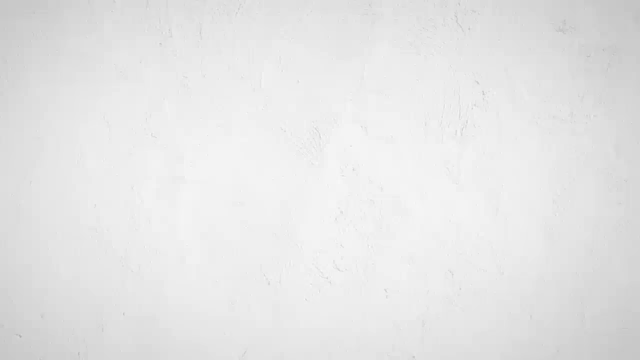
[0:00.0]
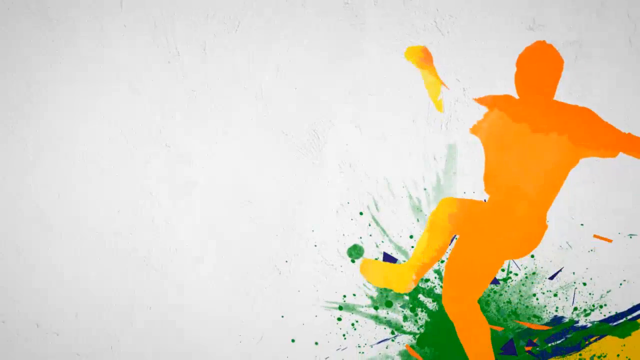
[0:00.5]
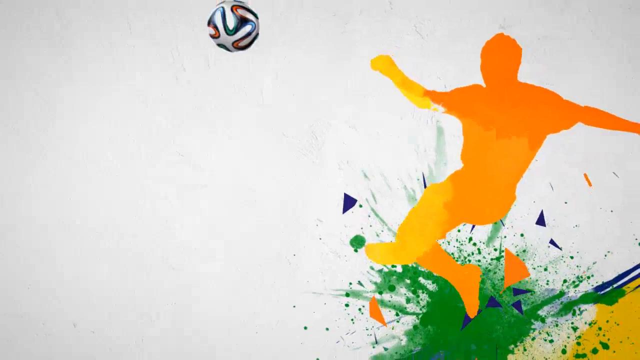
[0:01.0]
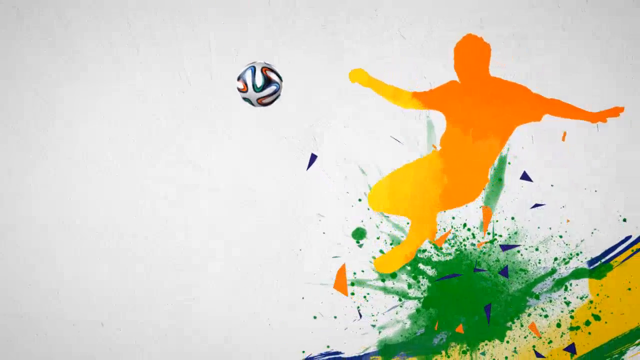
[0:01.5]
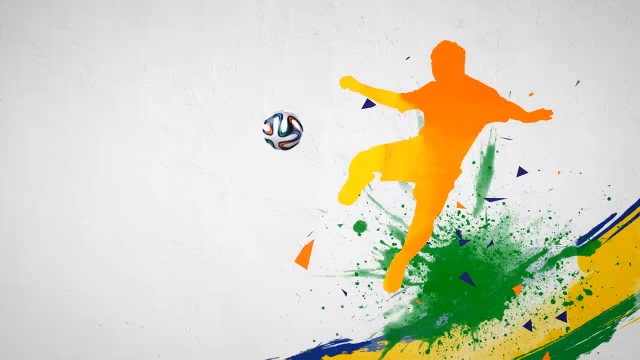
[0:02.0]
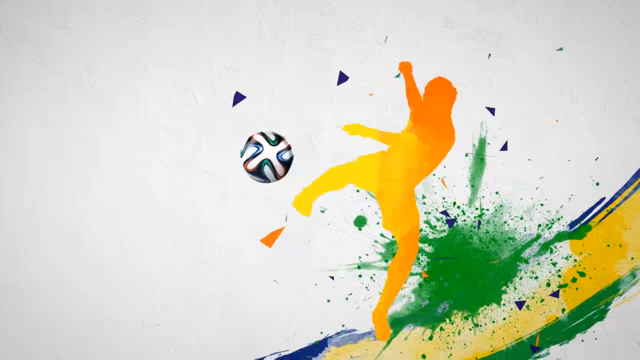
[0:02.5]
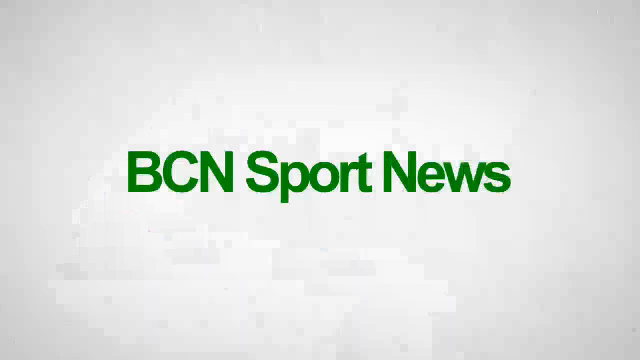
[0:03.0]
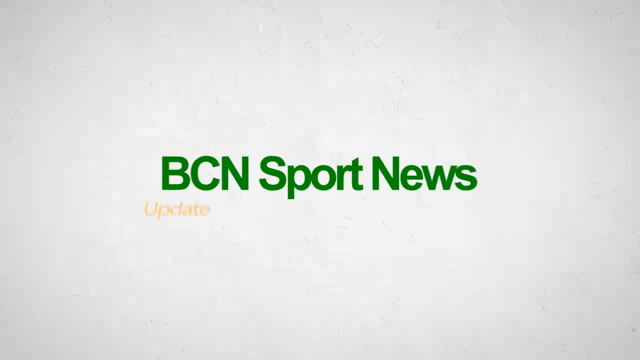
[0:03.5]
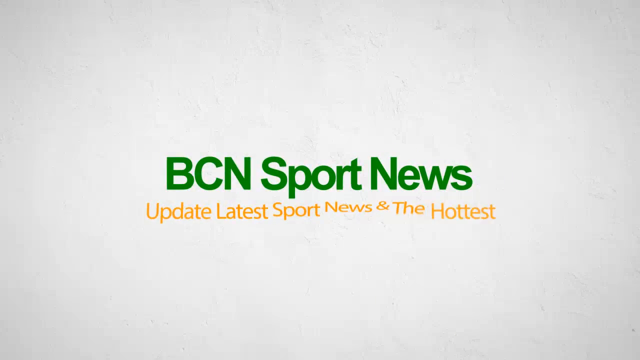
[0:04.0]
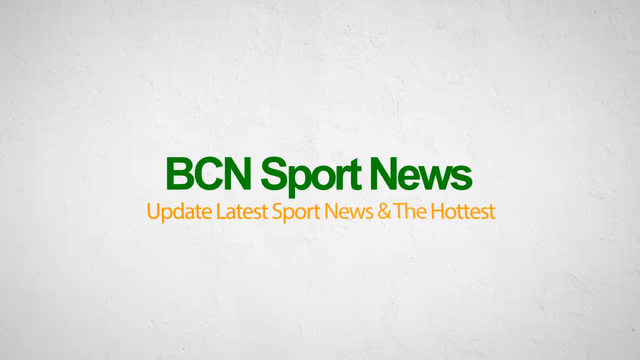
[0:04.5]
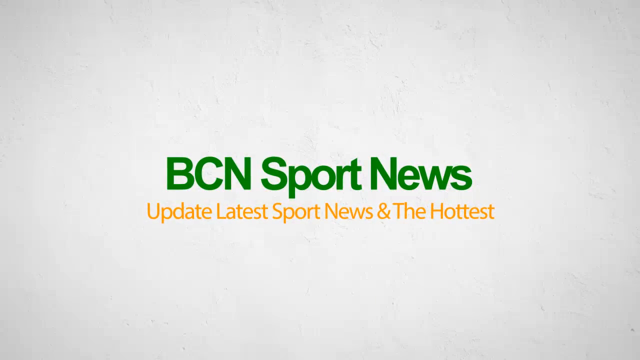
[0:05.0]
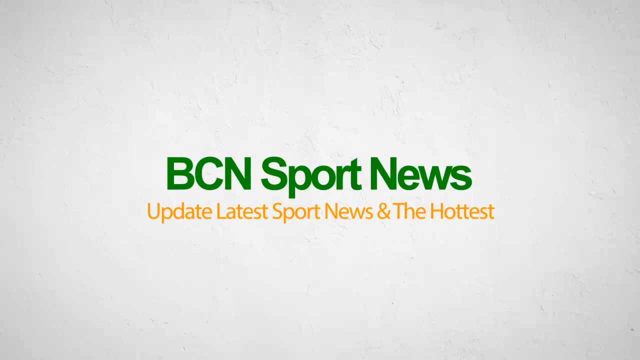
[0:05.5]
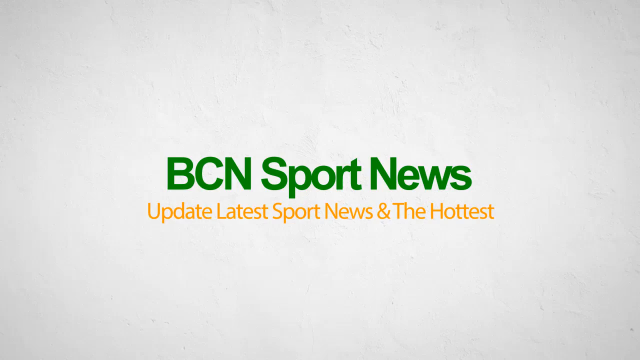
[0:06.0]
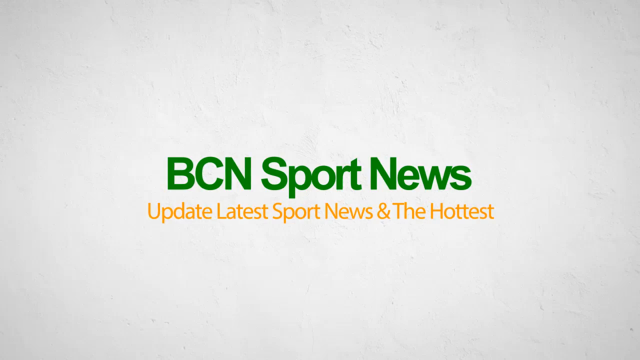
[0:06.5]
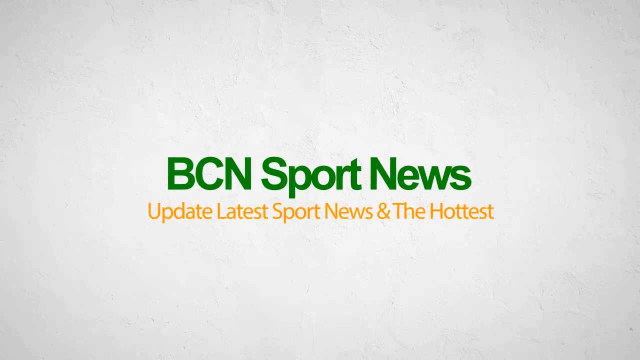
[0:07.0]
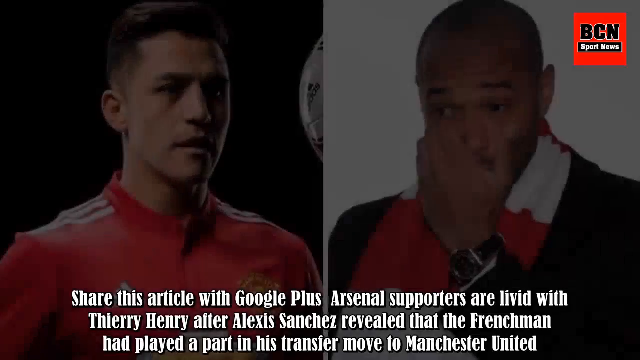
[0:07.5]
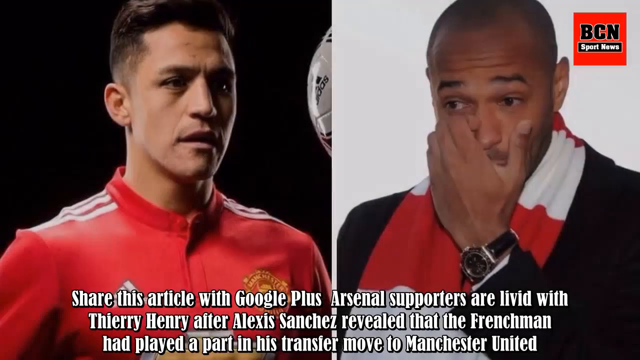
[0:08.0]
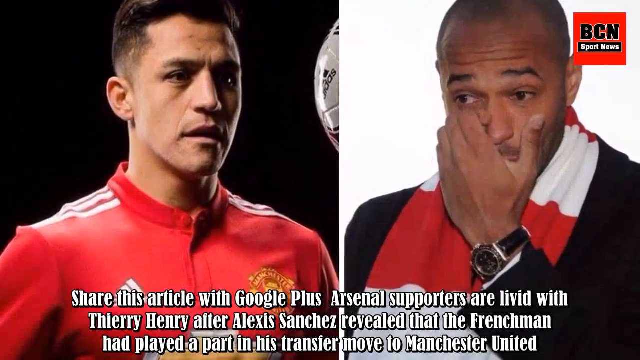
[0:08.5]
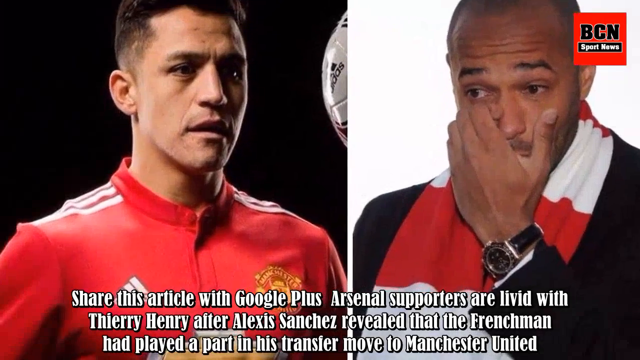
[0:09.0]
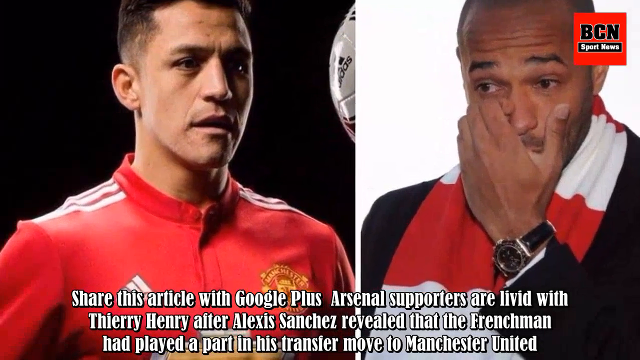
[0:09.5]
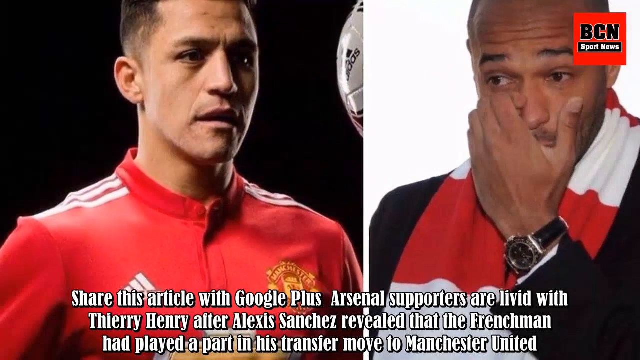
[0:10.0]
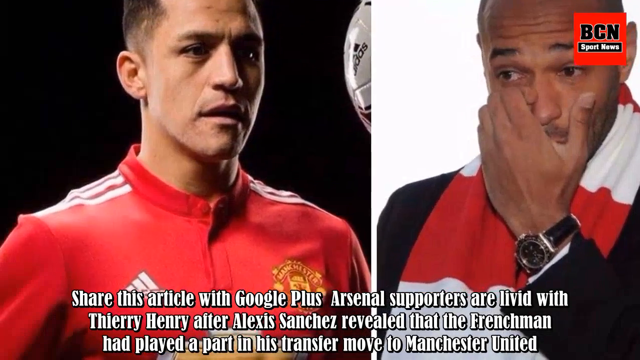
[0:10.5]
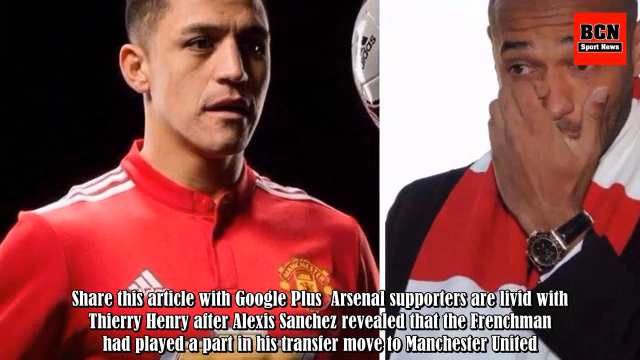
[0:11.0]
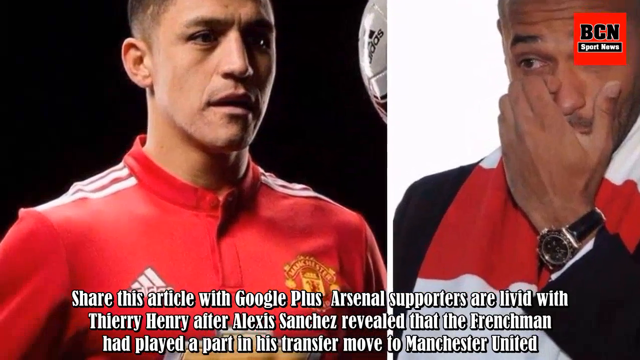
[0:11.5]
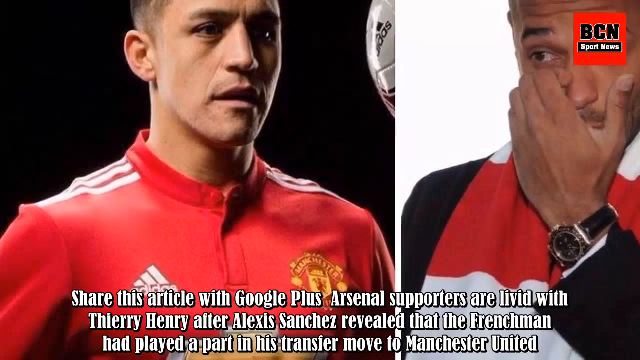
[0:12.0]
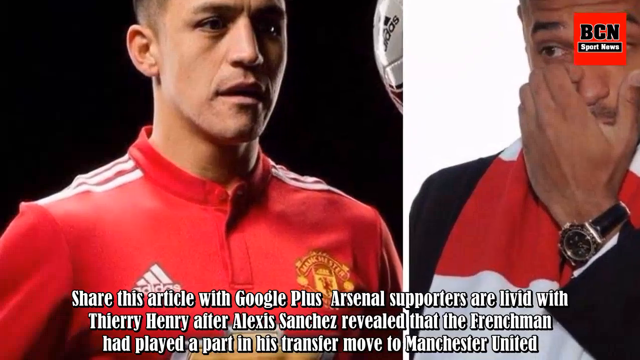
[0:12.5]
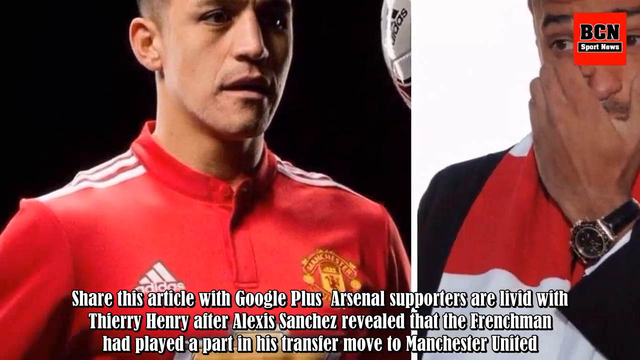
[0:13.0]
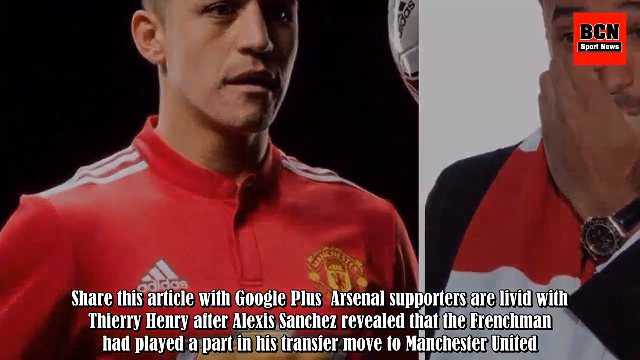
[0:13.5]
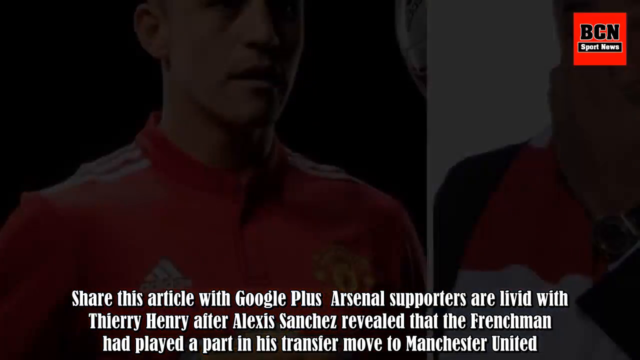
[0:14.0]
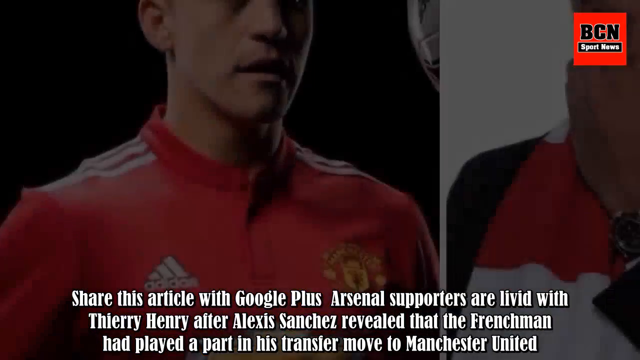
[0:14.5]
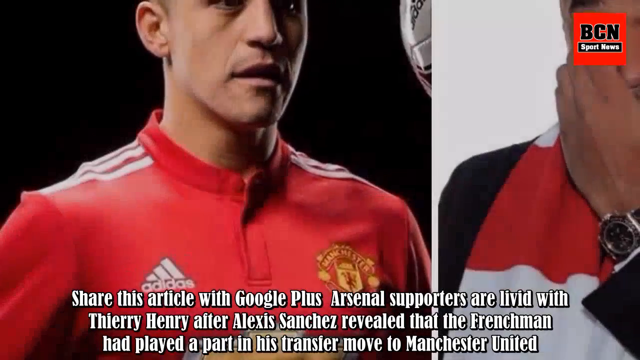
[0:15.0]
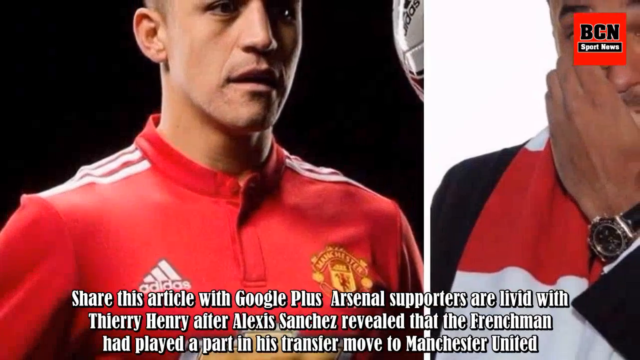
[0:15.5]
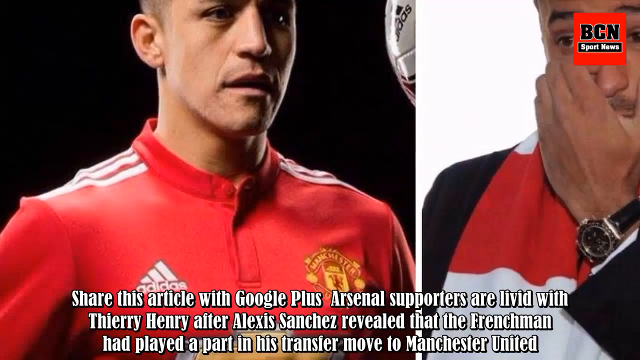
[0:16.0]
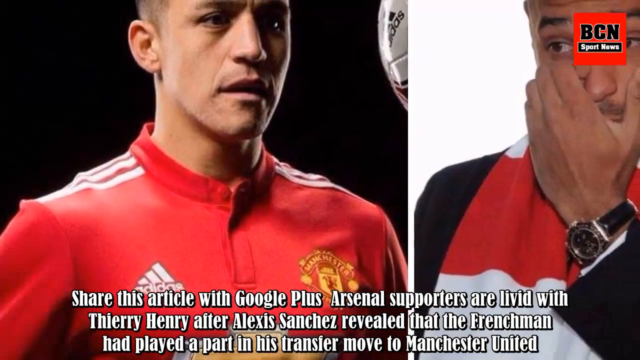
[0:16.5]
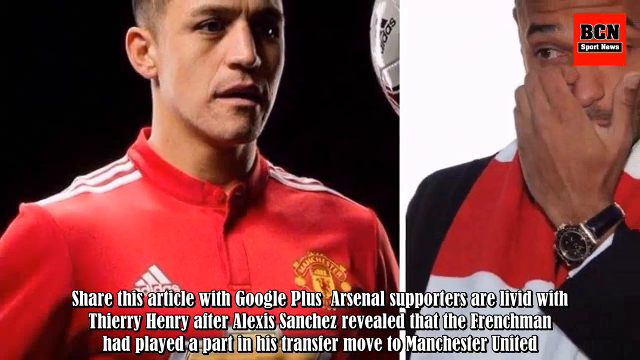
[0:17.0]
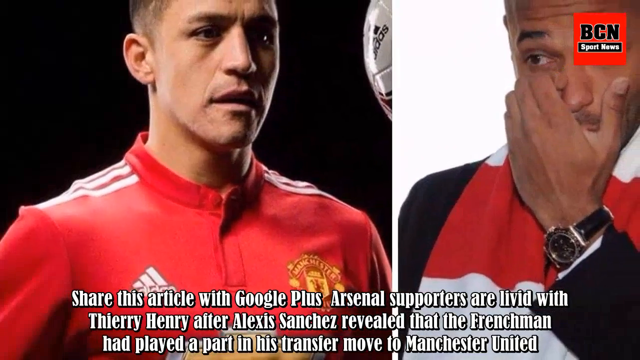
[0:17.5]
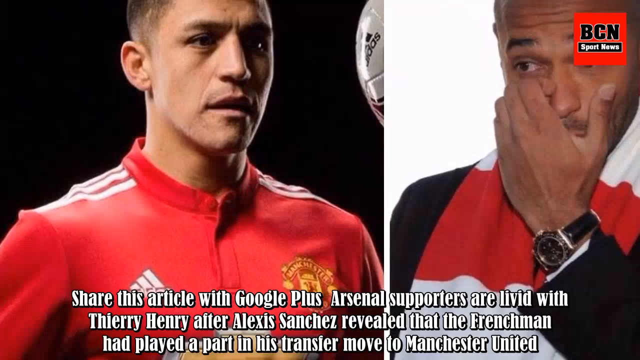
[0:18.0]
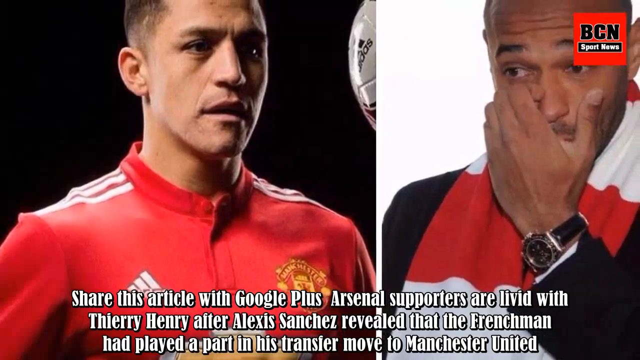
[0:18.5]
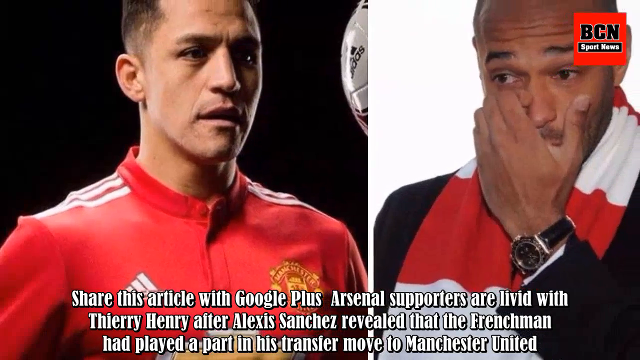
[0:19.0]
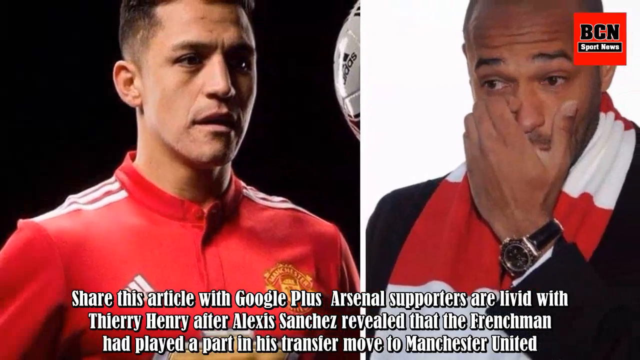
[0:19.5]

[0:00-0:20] An orange figure that looks like a man kicking a ball appears. Then an article shows images of two men, with text saying something about Arsenal, and "BCN Sport News" is visible; it is apparently sports news. One of the men wears a red and white Adidas Manchester United jersey. The other, a Black man, wears a red scarf with white around his neck.